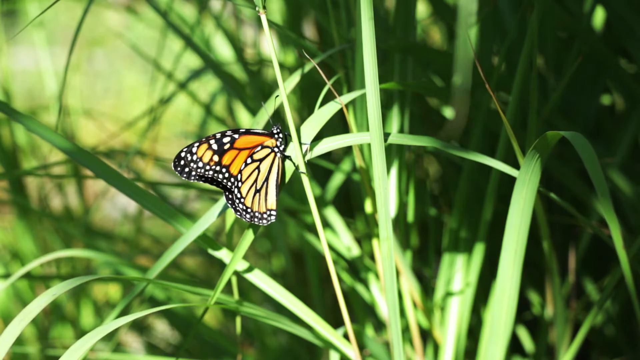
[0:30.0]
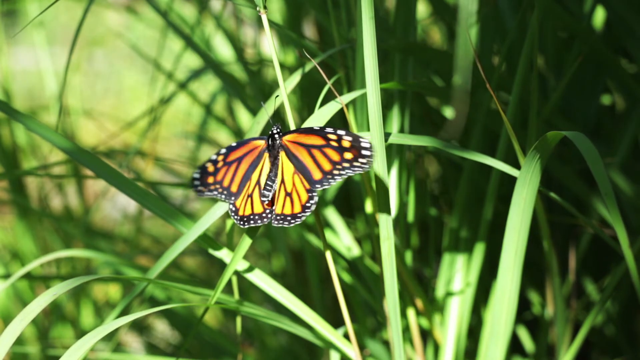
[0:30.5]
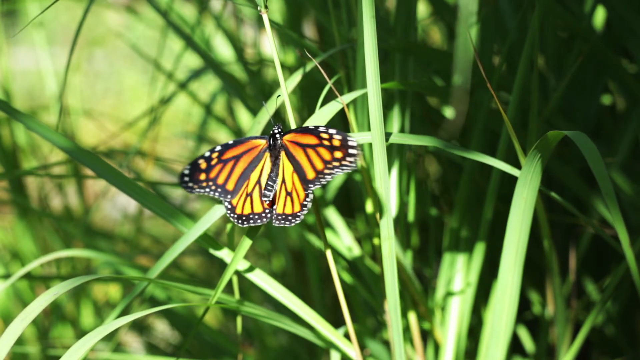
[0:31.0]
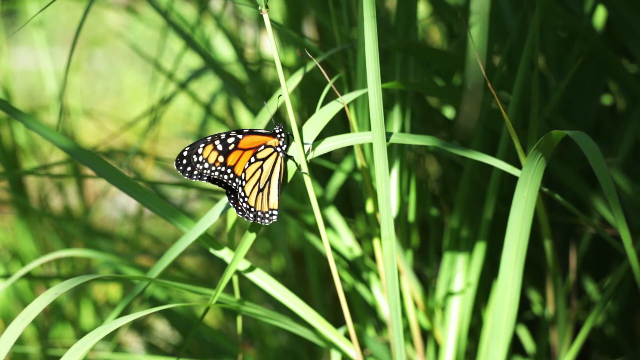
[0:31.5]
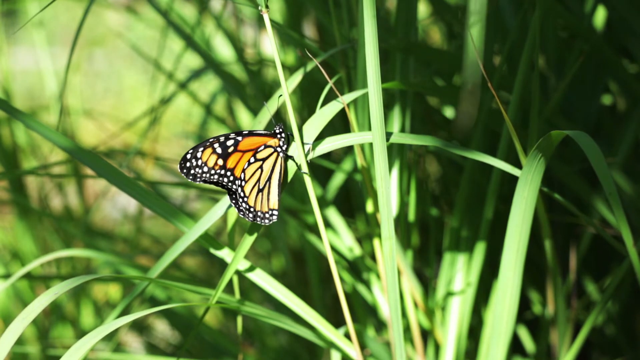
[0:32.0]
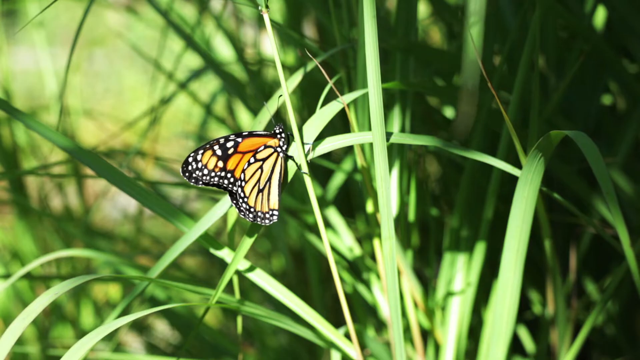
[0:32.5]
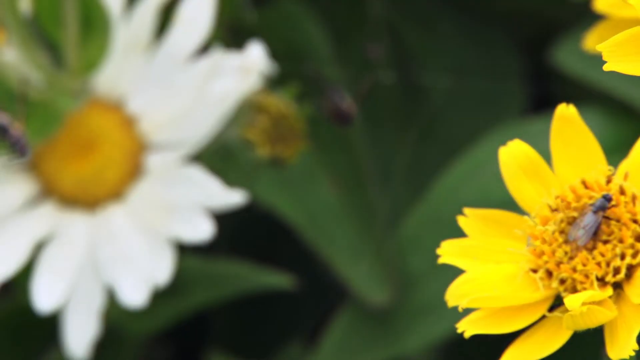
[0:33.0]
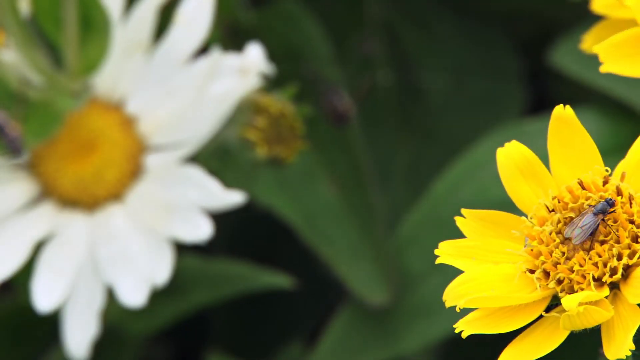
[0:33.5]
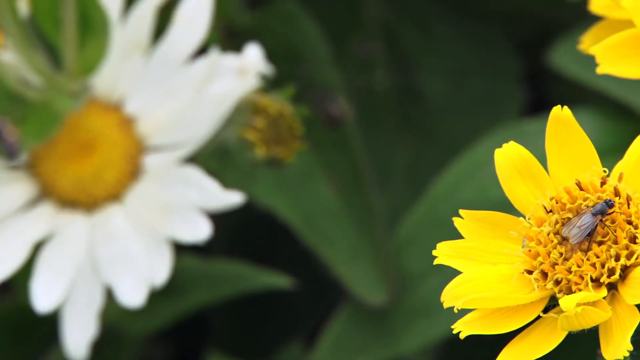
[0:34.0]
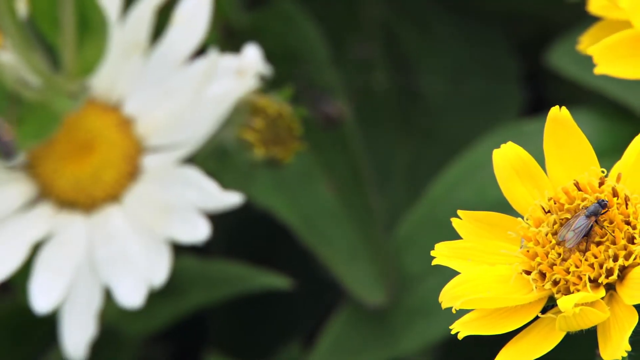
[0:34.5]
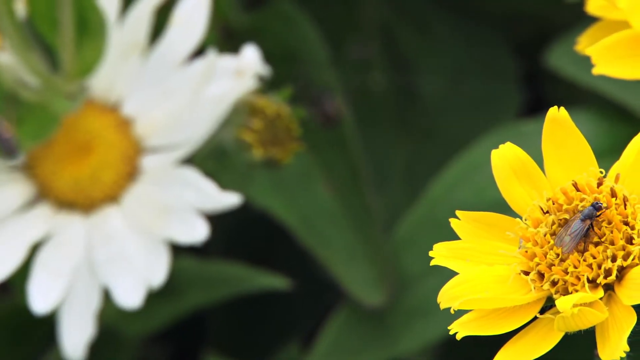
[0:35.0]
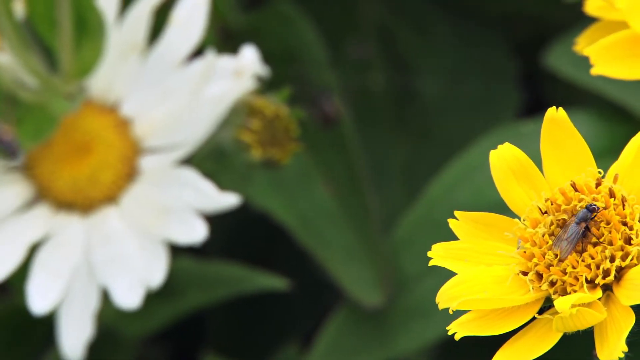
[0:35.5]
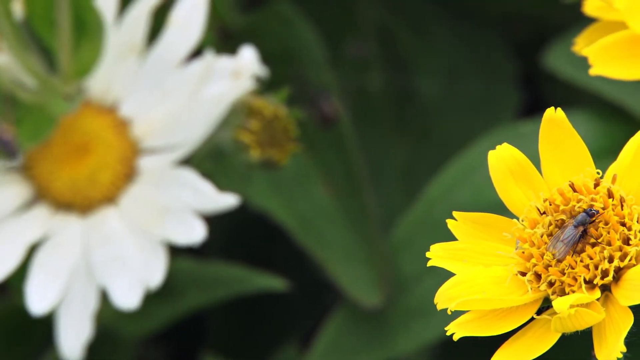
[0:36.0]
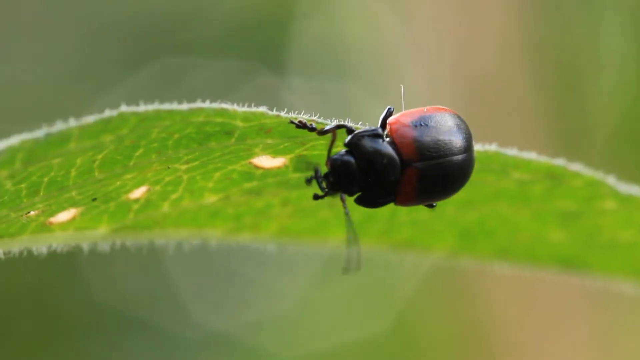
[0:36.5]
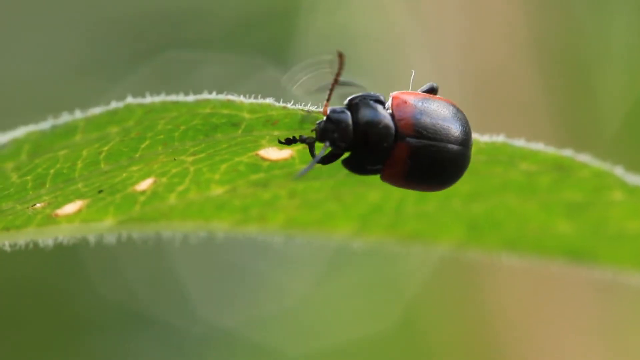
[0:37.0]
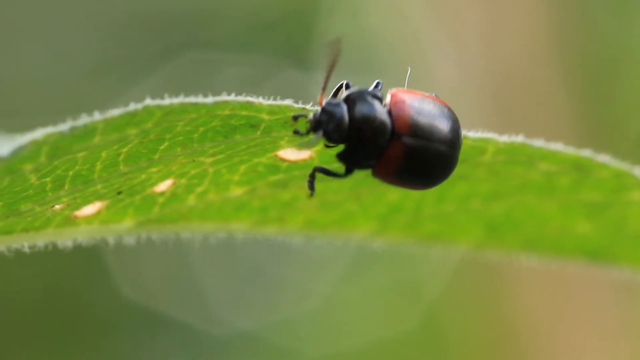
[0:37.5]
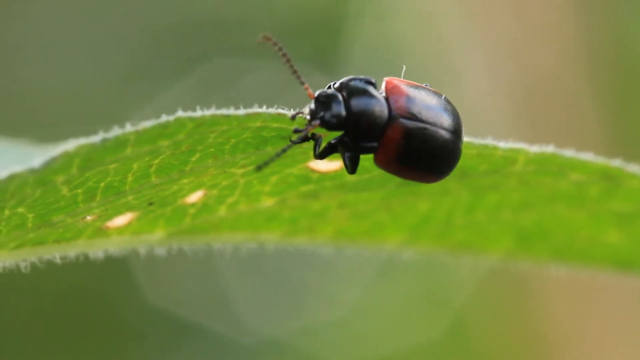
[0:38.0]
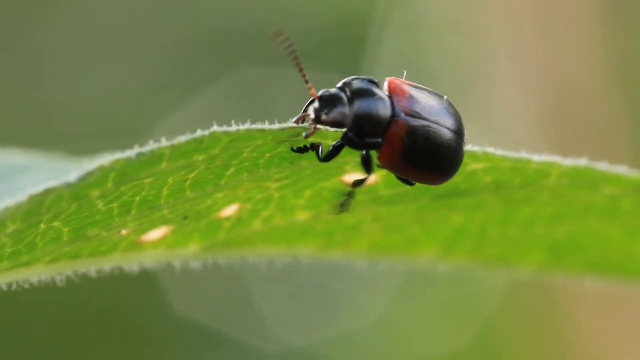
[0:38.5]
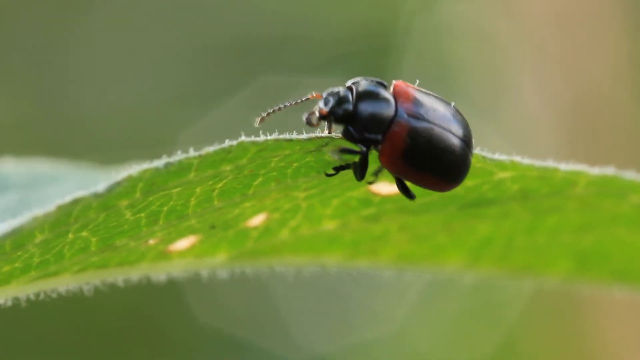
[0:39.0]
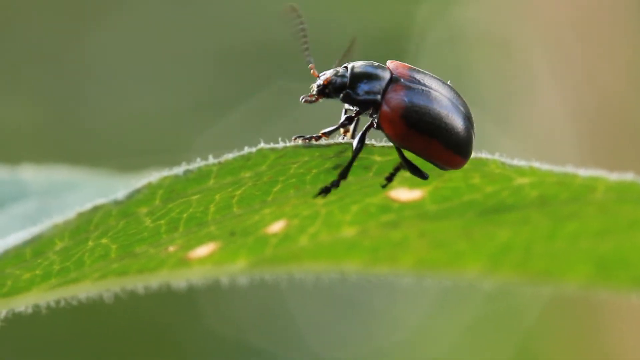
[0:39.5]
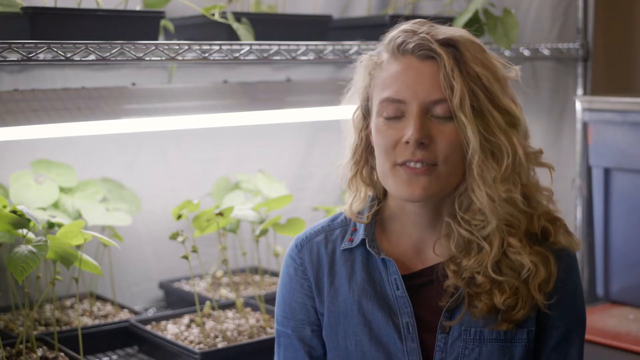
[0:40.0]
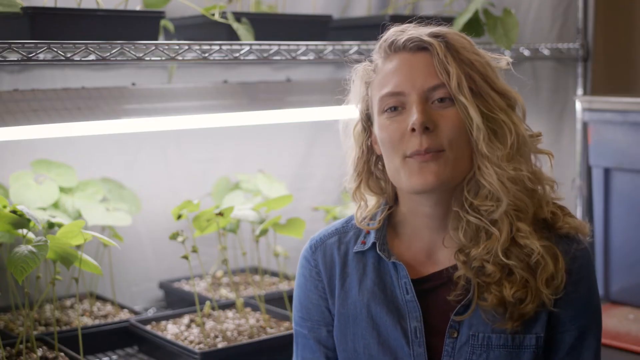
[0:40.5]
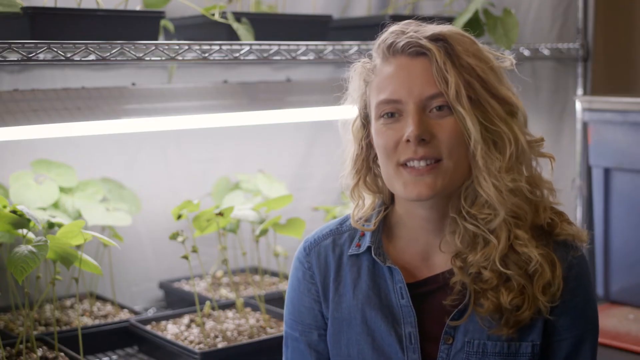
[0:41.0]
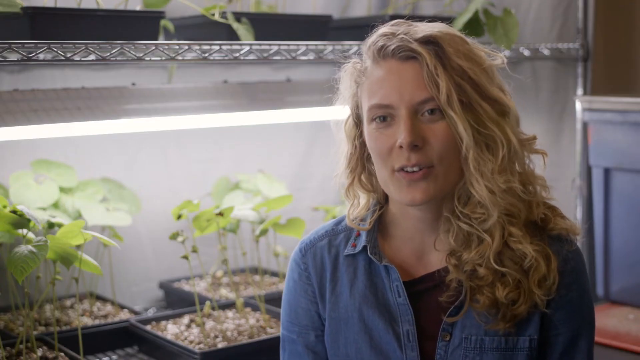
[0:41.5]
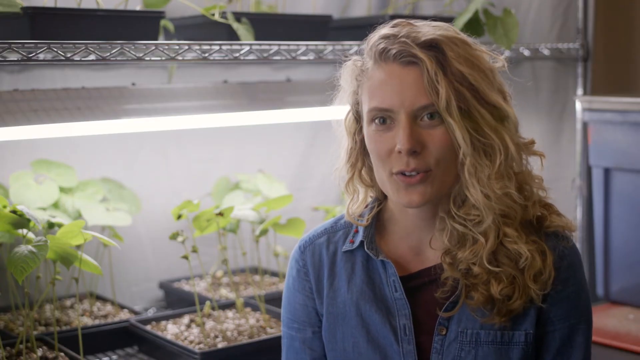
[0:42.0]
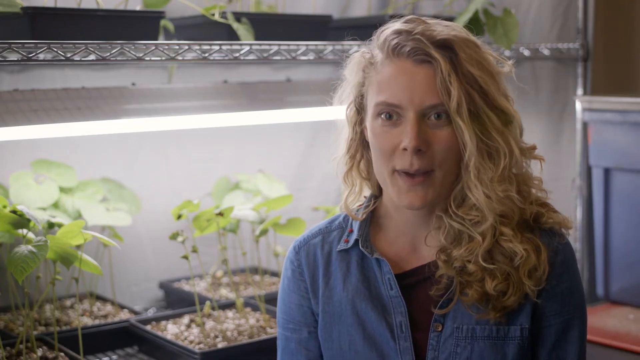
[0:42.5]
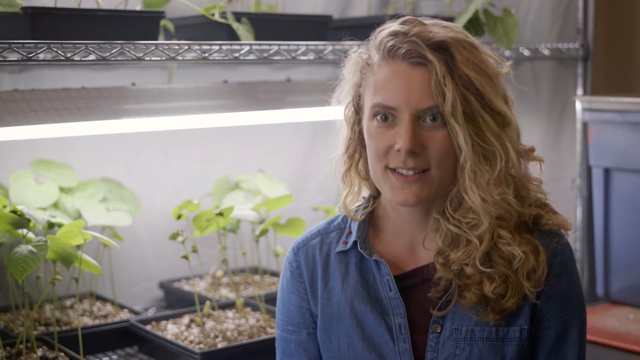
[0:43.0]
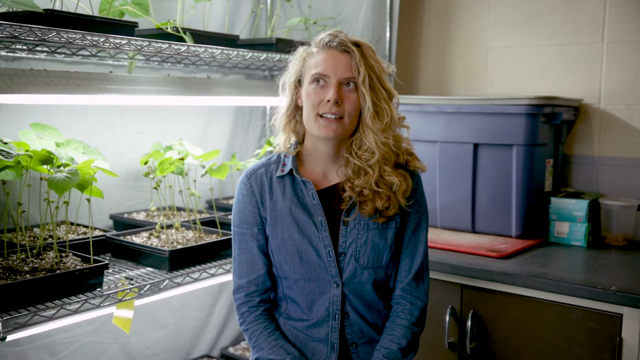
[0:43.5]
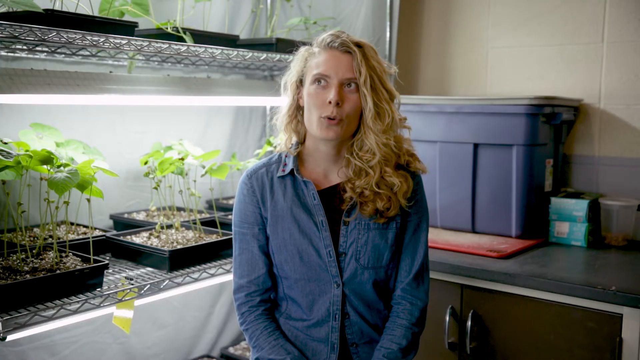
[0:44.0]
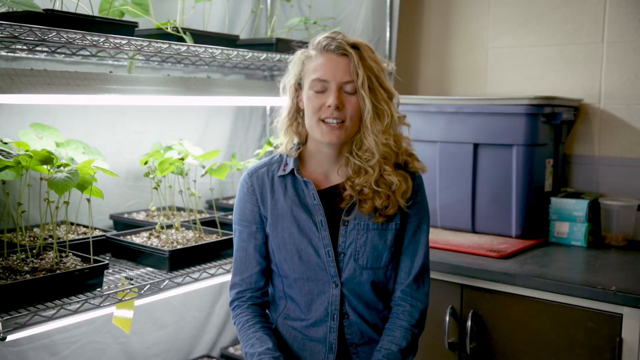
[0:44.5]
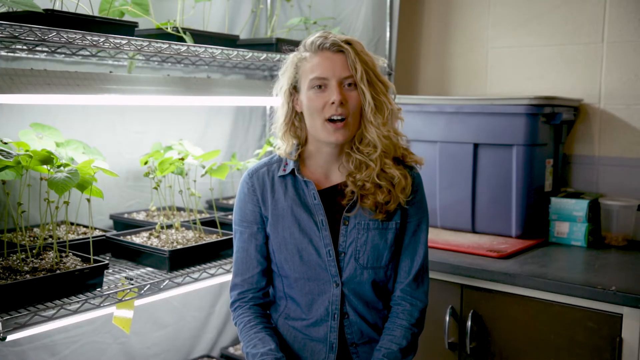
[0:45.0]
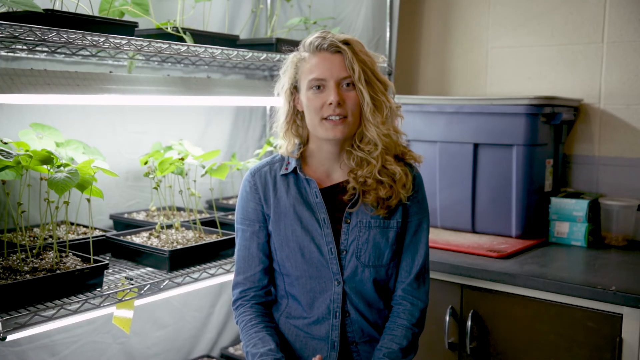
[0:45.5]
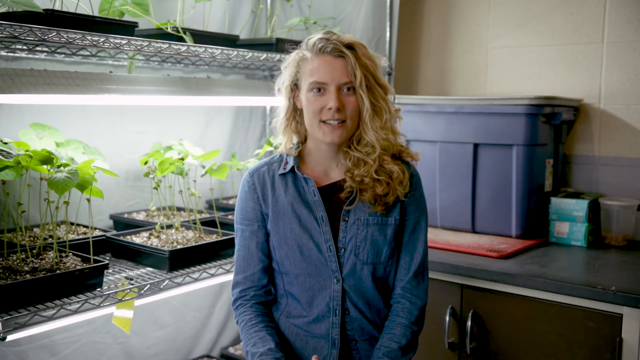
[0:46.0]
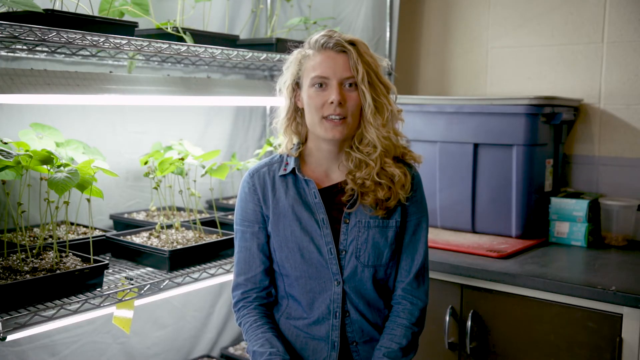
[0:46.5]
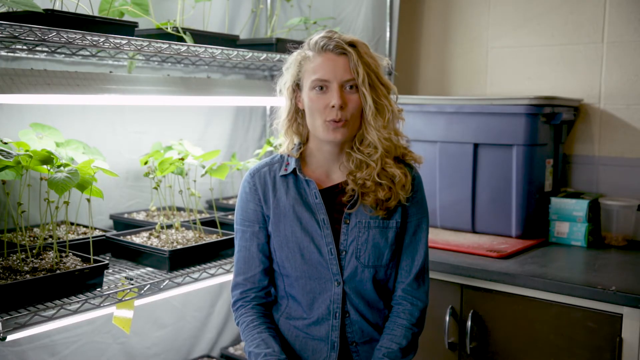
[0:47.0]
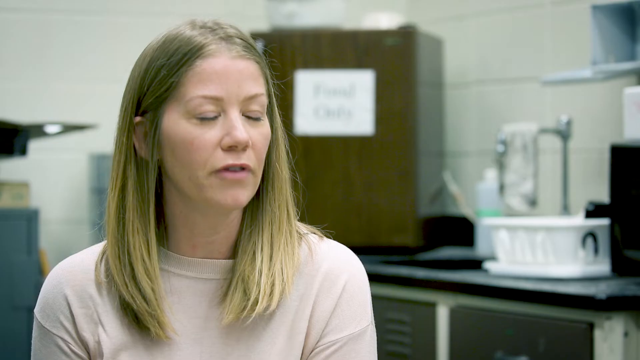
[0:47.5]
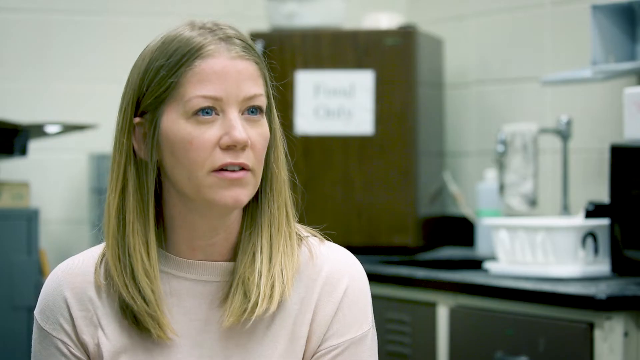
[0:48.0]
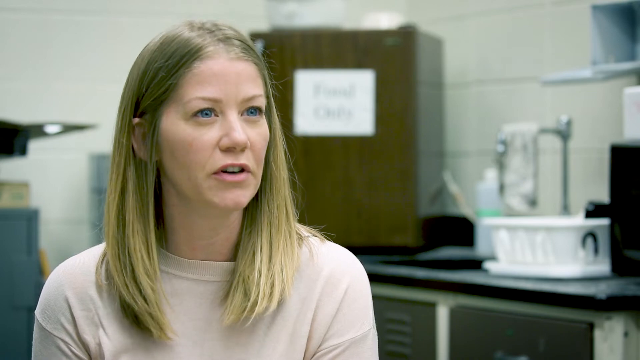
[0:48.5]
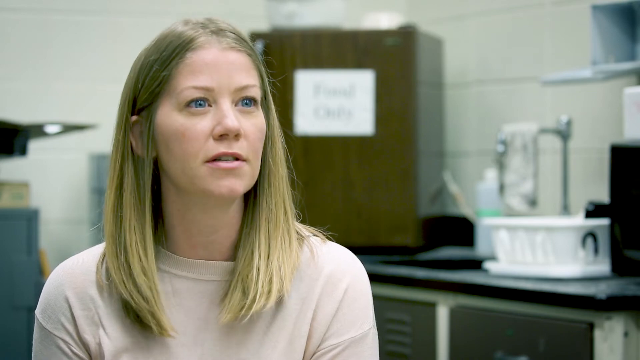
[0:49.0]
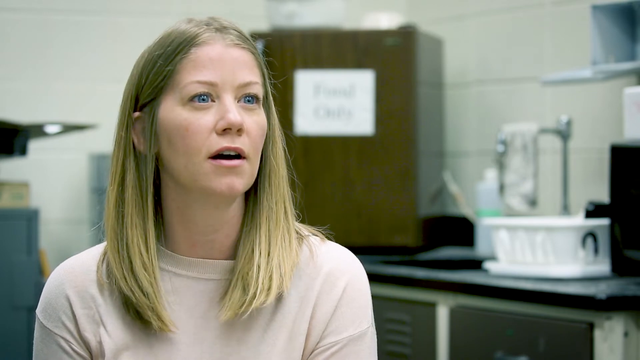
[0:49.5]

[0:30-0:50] Green leaves surround an orange, white, and black butterfly that flutters its wings. Then some flowers appear, with a fly on top of one of them; the background behind the fly on the flower is very blurry. A beetle crawls on a green leaf, shown up close, and some fuzz is visible on the leaf. A woman with long, blonde, wavy hair wearing a blue denim jacket talks to the camera, with plants and a blue container behind her. Another woman with straight blonde hair and blue eyes is then seen talking. Some cats are in the room with one of the women who is talking.